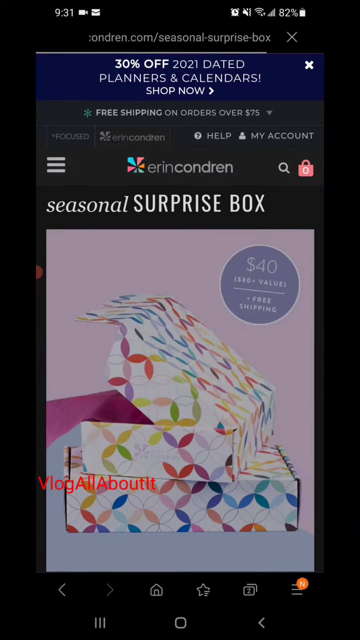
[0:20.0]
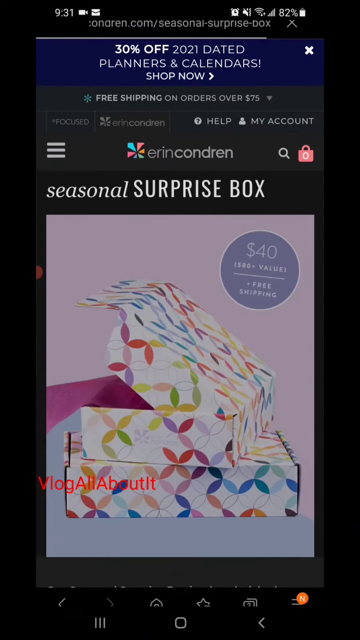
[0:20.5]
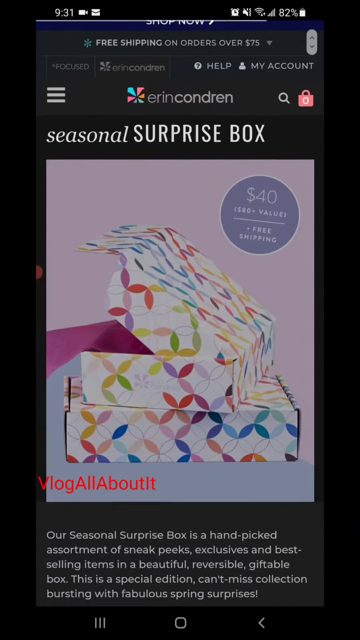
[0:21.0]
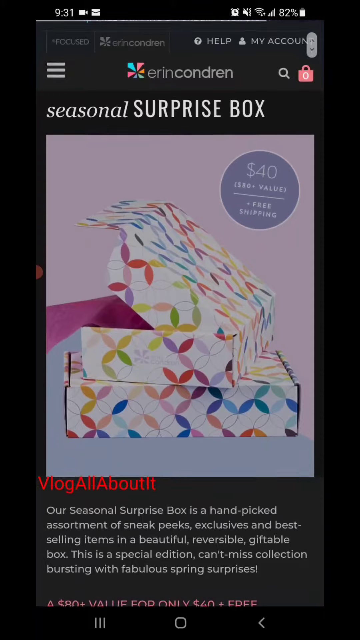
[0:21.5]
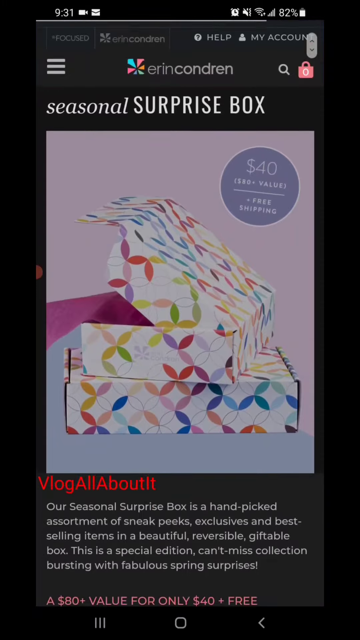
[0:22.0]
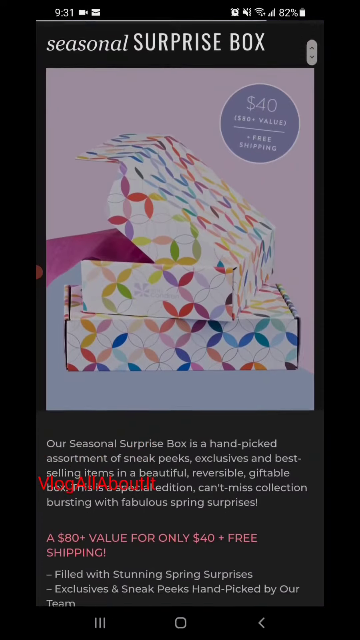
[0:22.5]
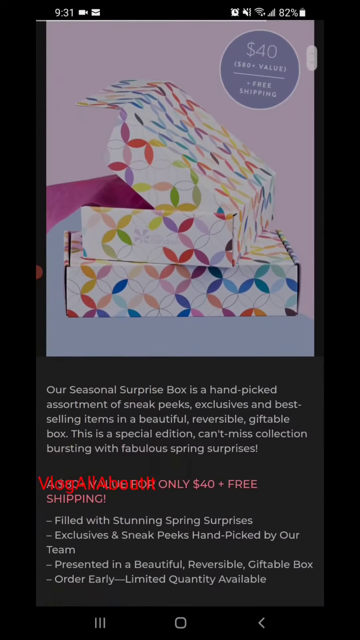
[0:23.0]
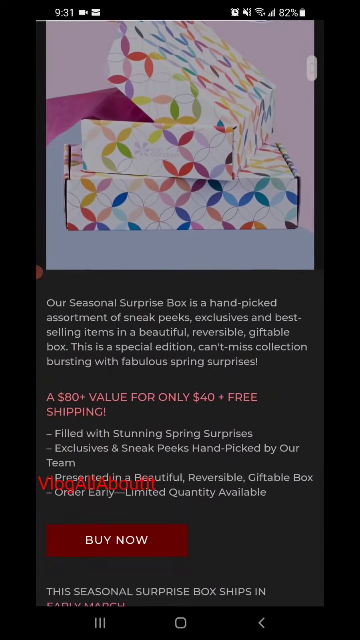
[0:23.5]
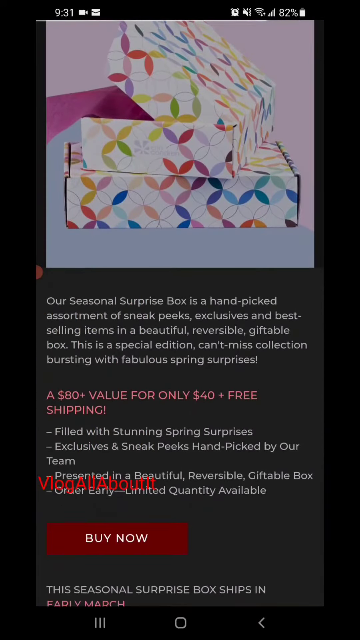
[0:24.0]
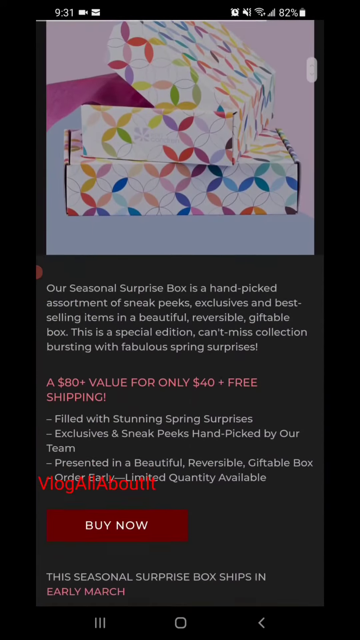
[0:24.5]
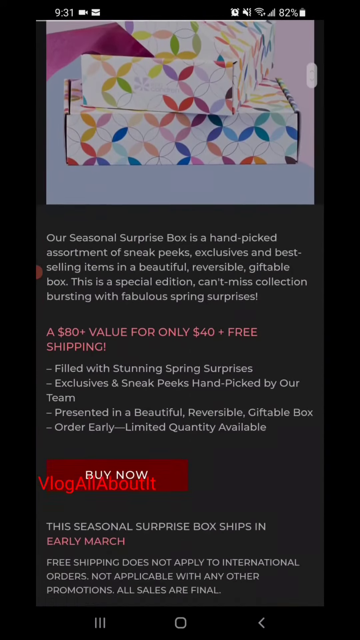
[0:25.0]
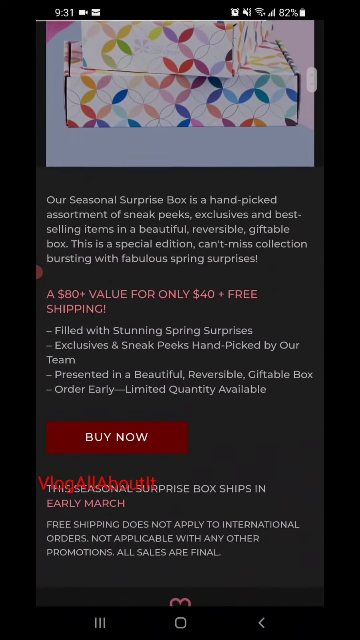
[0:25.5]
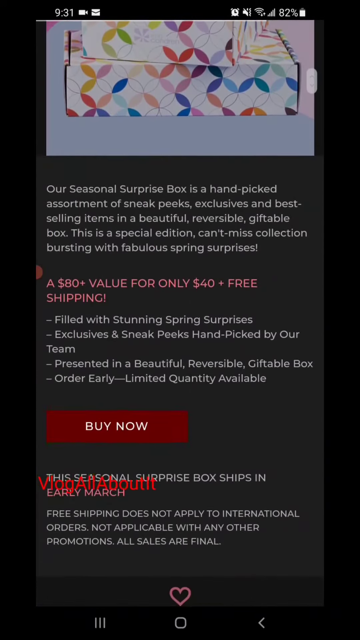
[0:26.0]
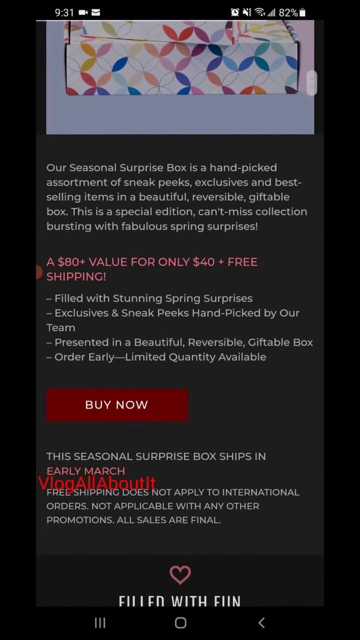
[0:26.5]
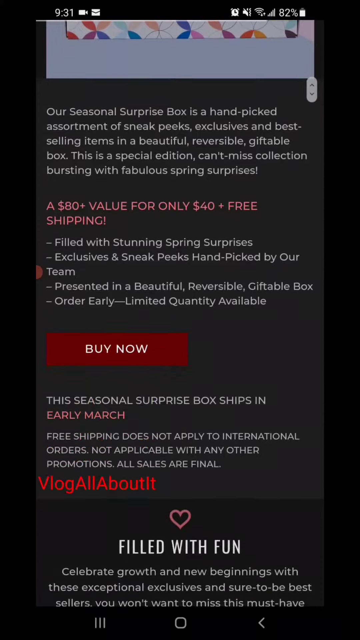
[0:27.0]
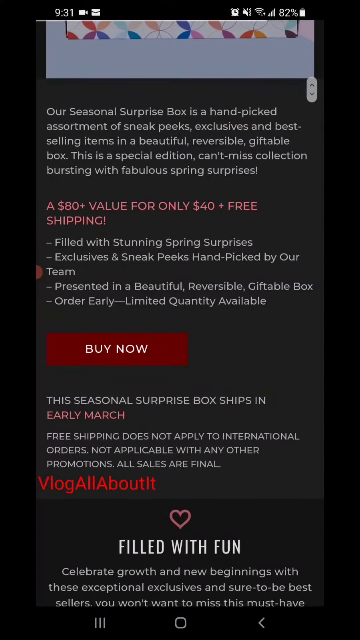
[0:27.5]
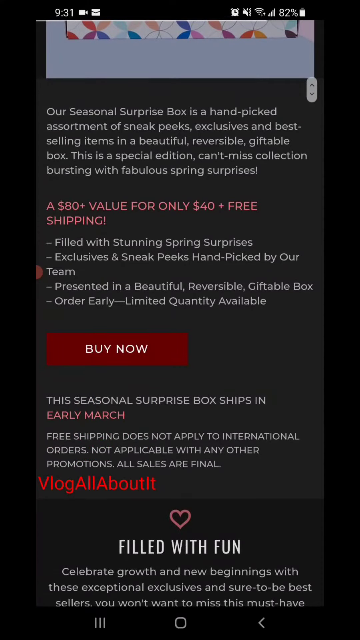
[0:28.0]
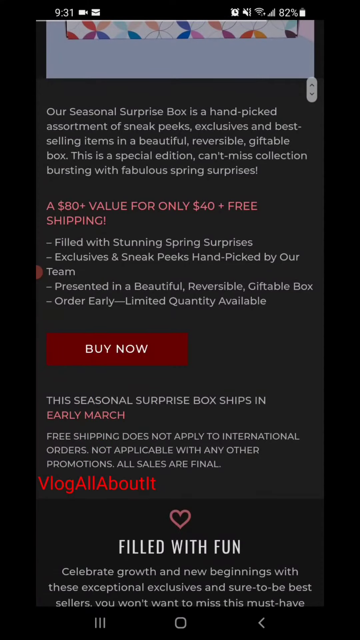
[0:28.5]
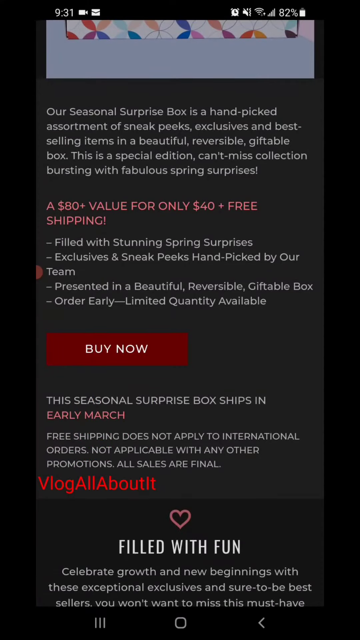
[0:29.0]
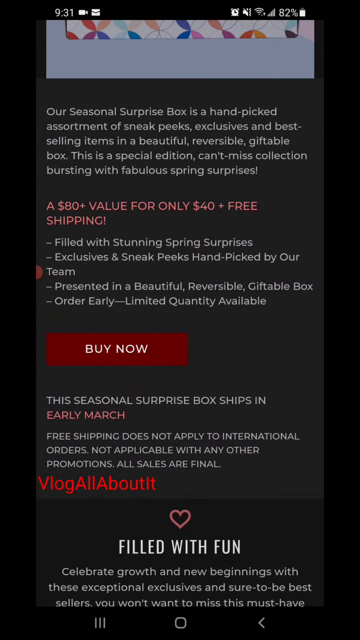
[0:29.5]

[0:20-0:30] The Erin Conrad site is shown with the text "seasonal surprise box, 40% off"; what is written inside a circle is hard to read. Two colorful boxes are on top of each other, and one of them is open with some tissue paper. The words "vlog all about it" appear. Further text reads that the seasonal surprise box is a hand-picked assortment of sneak peeks, exclusives and best-selling items in a beautiful, reversible, giftable box, "This is a special edition," a can't-miss collection bursting with fabulous spring surprises. More text mentions an $80 value for $40, filled with stunning spring surprises and exclusive sneak peeks, hand-picked by the team and presented in beautiful, reversible gift boxes. The page then states that the surprise boxes ship in March, followed by text about growth and new beginnings with these exceptional exclusives, sure to be the best sellers, "you don't want to miss."